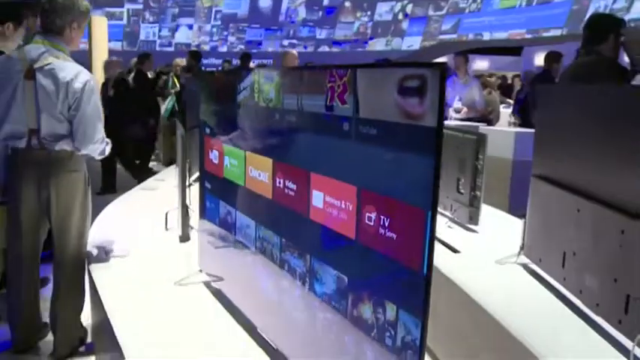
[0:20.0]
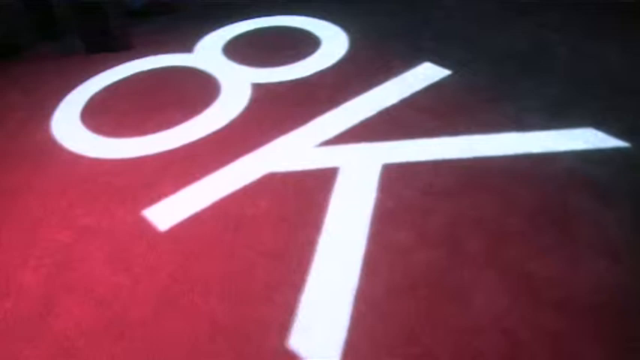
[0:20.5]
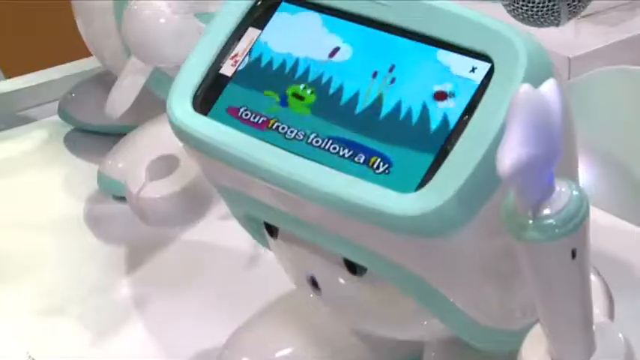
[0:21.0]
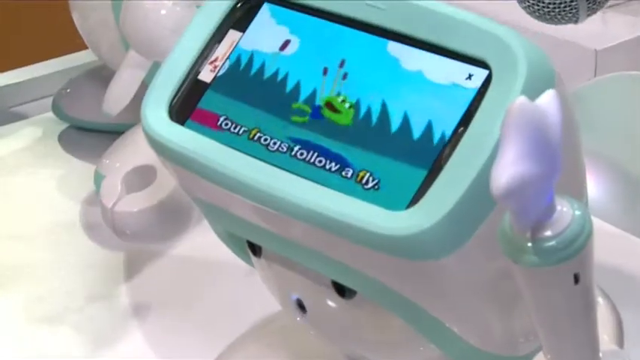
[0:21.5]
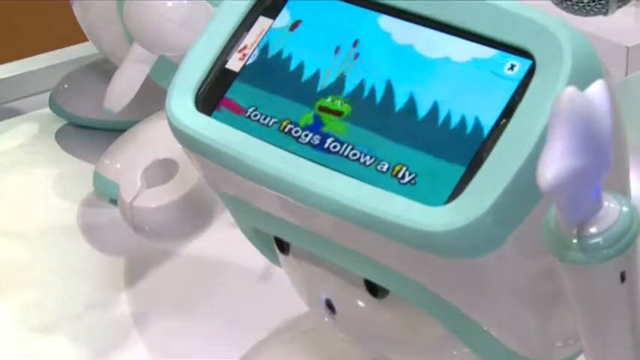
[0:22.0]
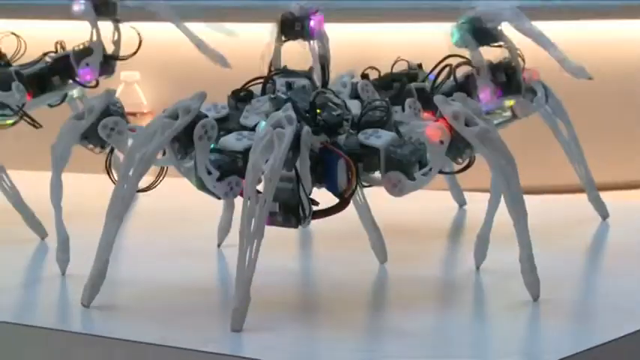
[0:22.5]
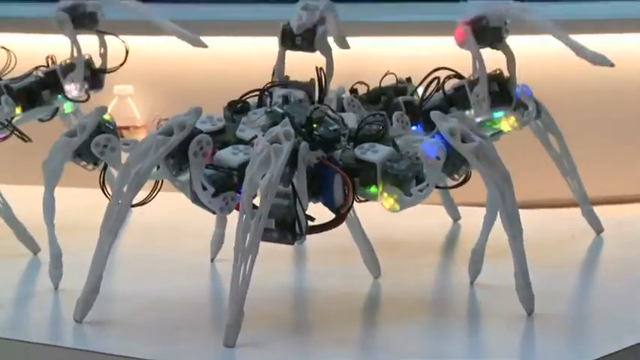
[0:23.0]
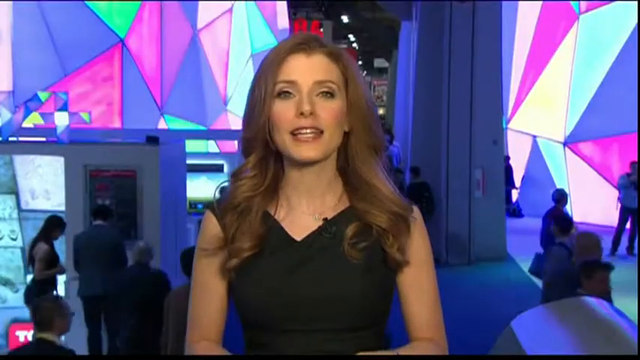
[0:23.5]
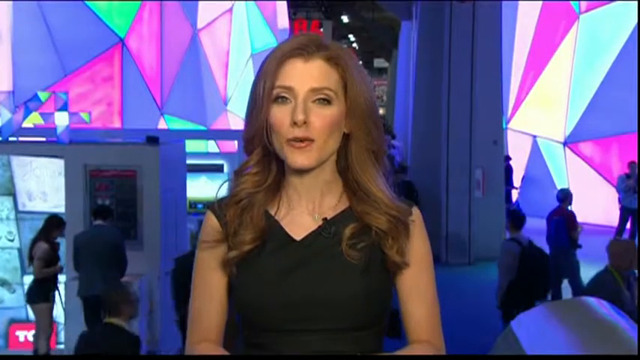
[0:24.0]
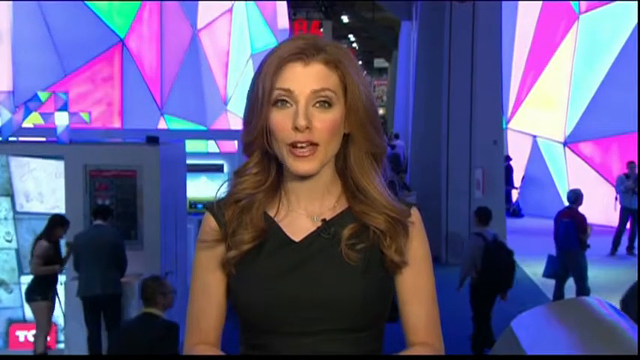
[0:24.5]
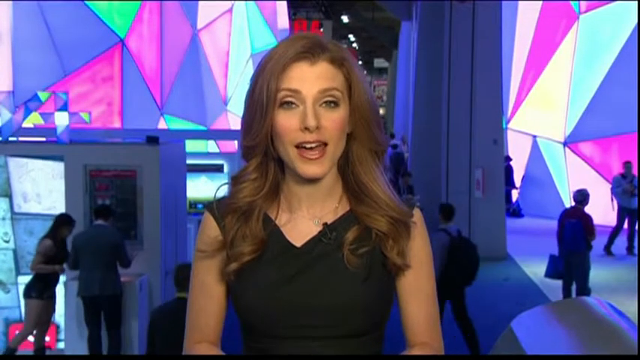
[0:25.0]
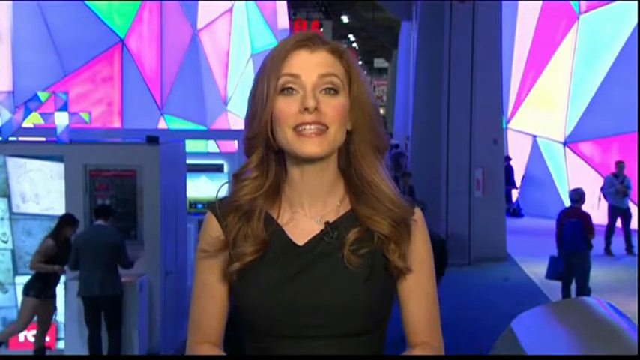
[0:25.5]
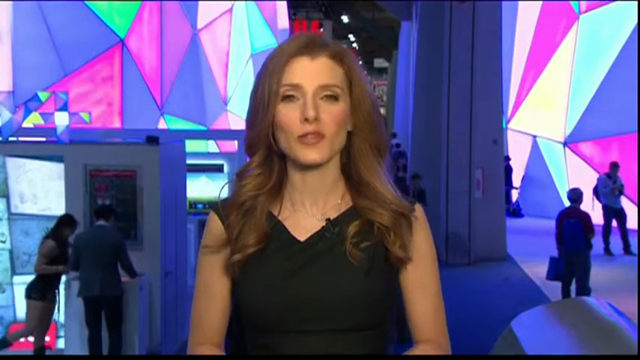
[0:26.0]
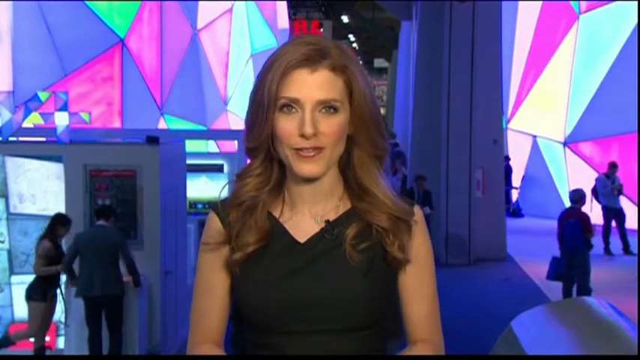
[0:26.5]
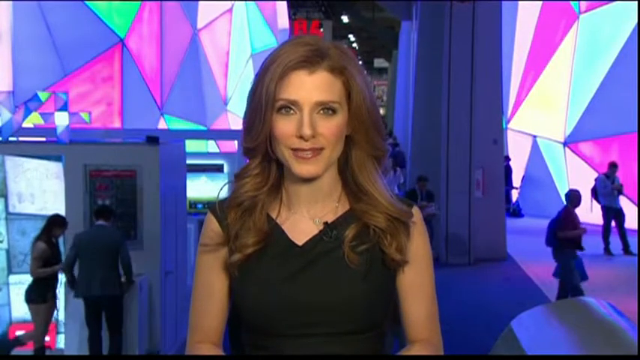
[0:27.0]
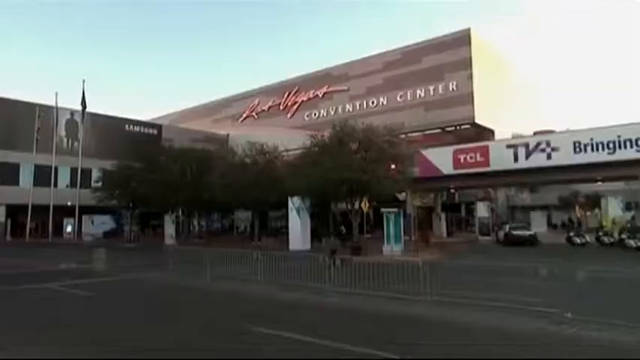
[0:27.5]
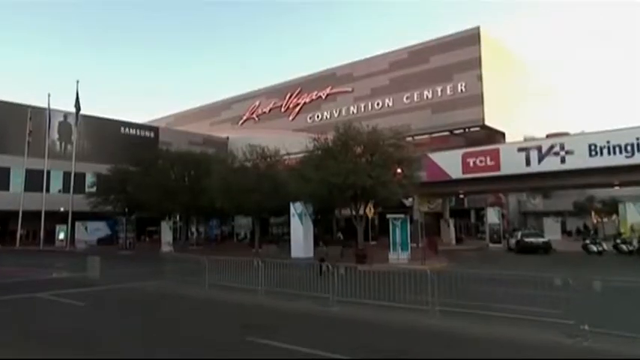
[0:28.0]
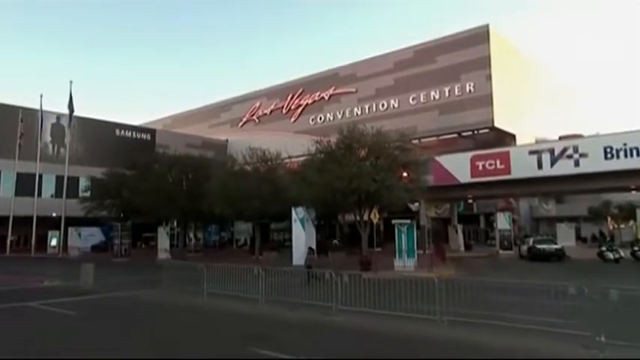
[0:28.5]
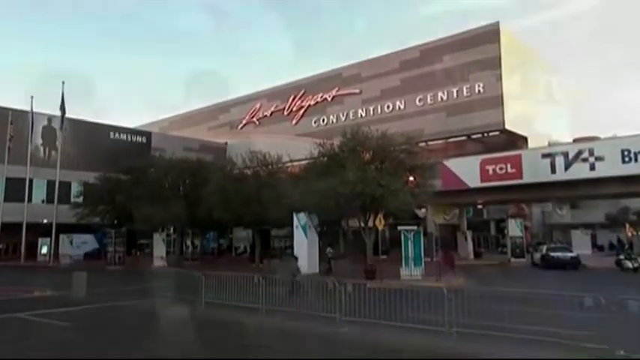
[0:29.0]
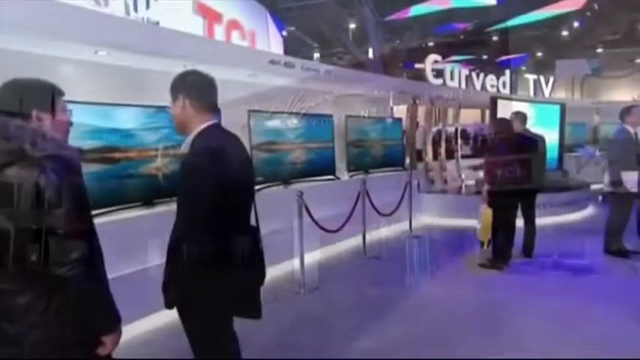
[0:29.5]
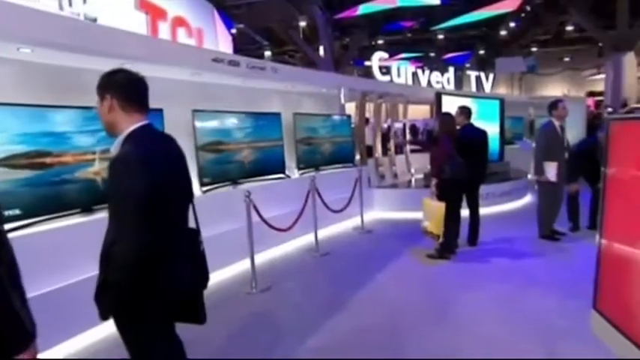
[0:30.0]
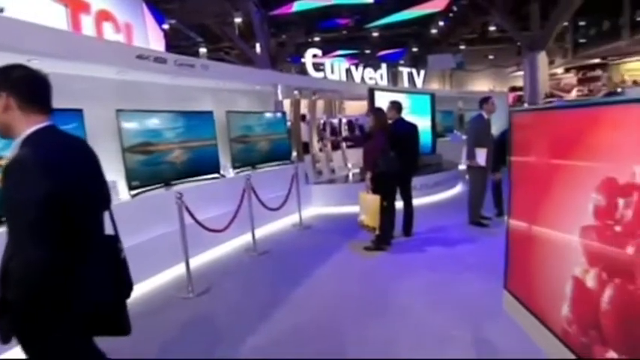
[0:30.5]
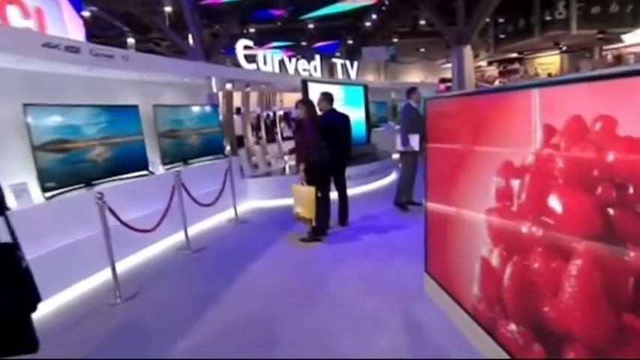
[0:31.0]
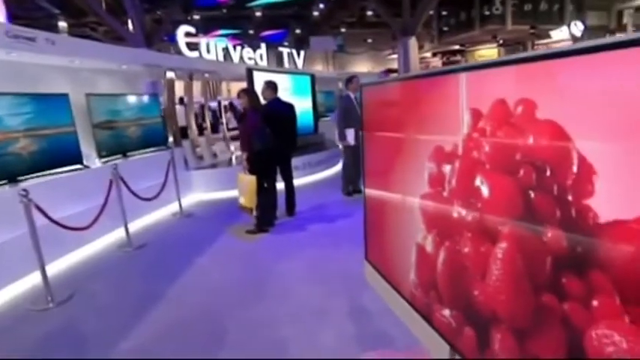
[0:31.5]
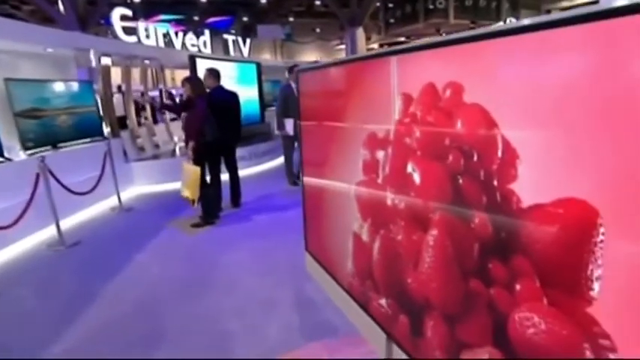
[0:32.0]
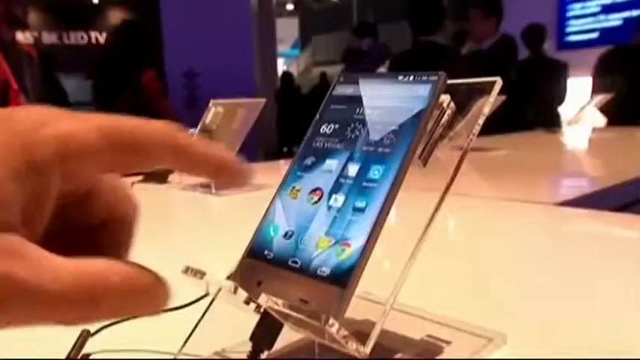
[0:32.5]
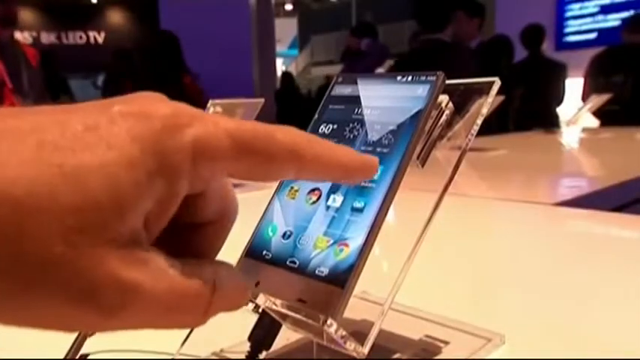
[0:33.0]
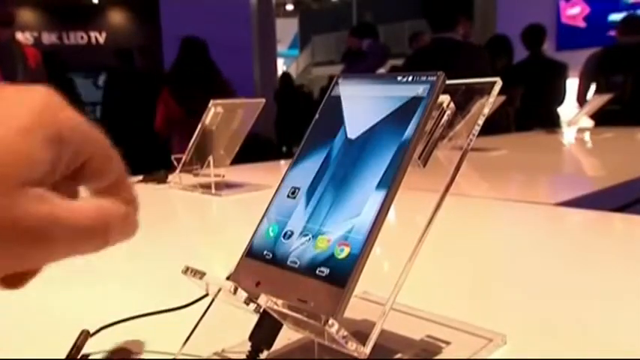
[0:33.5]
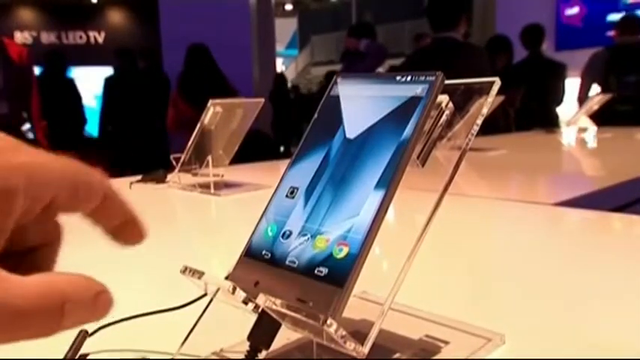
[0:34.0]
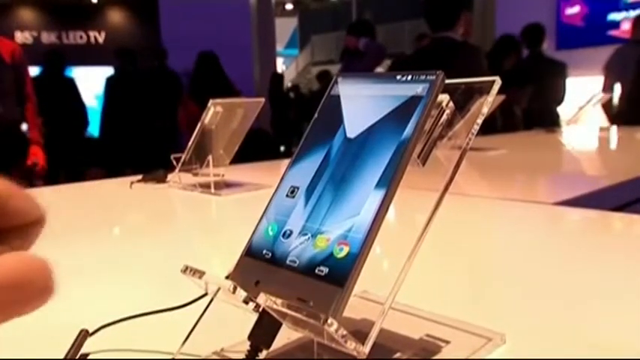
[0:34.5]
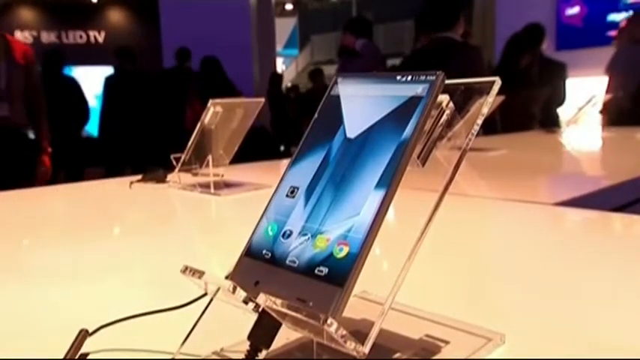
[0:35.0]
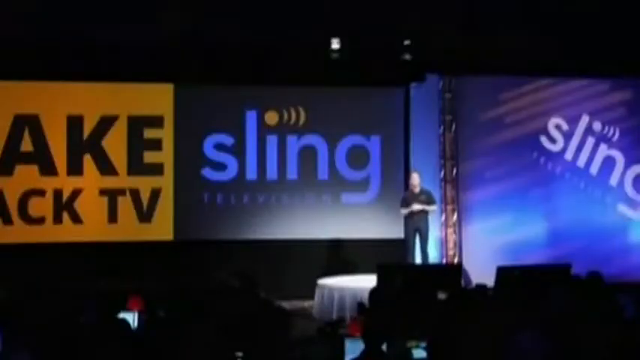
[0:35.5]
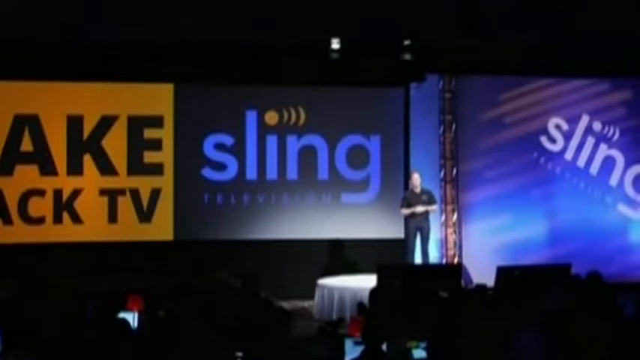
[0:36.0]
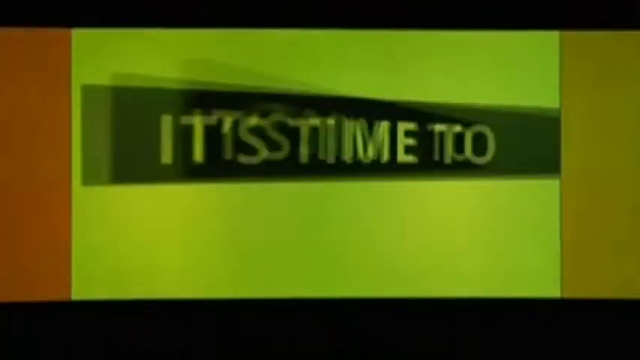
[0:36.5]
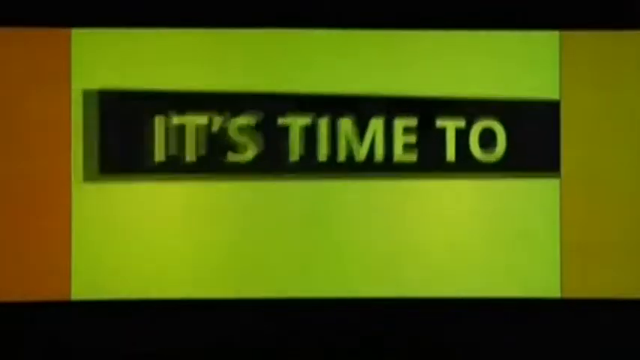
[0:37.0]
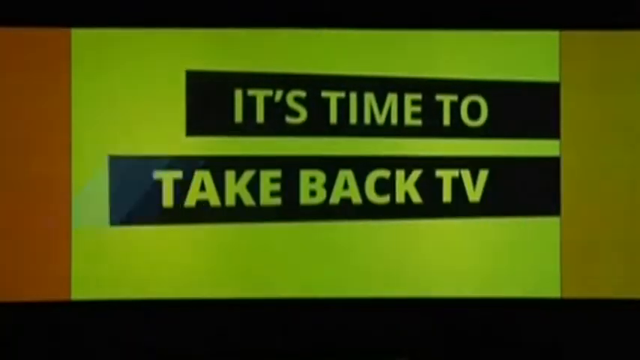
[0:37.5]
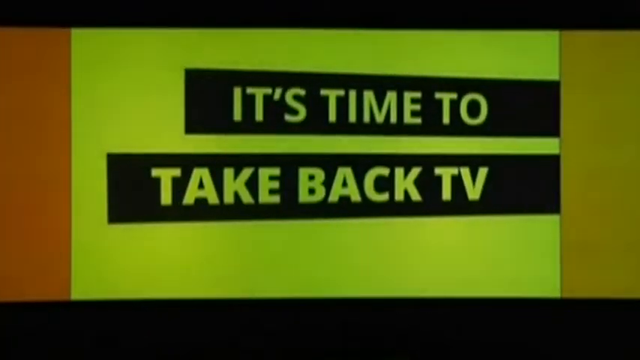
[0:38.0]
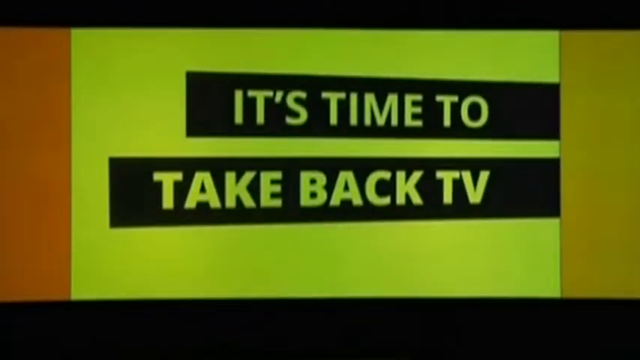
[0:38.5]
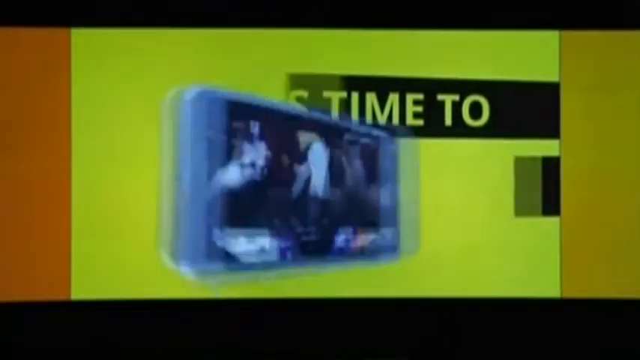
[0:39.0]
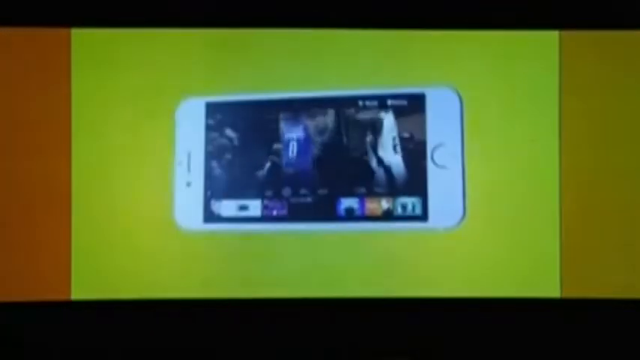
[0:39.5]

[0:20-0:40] The TV has a few buttons in the center; the one on the very right says "TV by Sony," and to the right of that is another label ending in "TV" that is too blurry to read. A close-up shot shows "8K," suggesting it is an 8K display TV. Next, a little white ball with two black dot eyes and a small circle for a mouth holds up a blue rectangular prism. A smart screen on it plays a video of a frog jumping, with a bottom caption reading "four frogs follow a fly." Three robots then shake their legs as they dance among flashing lights. The video returns to the reporter as she talks, followed by an outside shot of the convention, which seems to be at the Las Vegas Convention Center. A section called "curved TV" has men and women standing and looking at various curved TVs; as the camera pans right, one on the right is not curved at all. A person's left hand uses its index finger to scroll through a new phone. Someone on stage then appears to be presenting Sling, some sort of TV app or TV-related product.